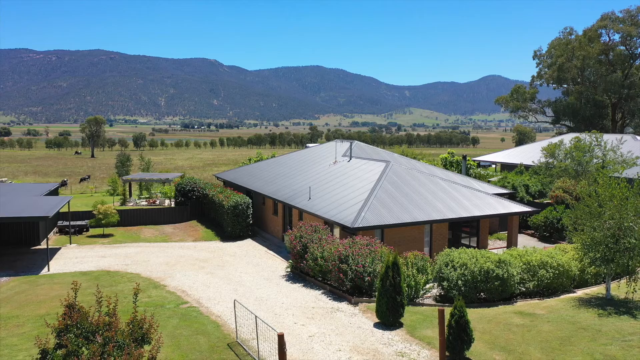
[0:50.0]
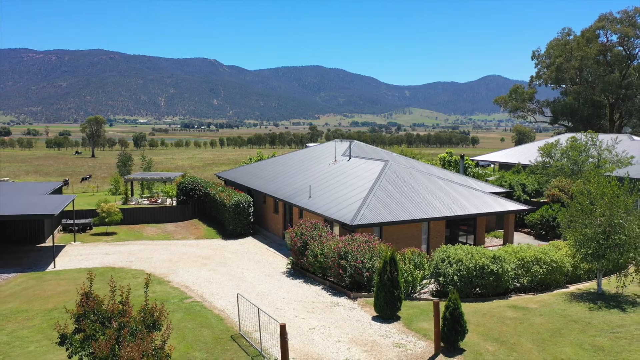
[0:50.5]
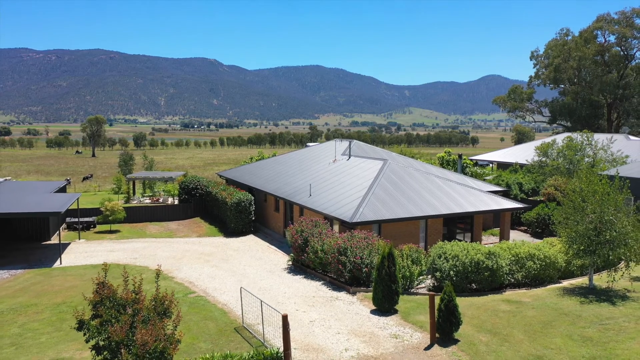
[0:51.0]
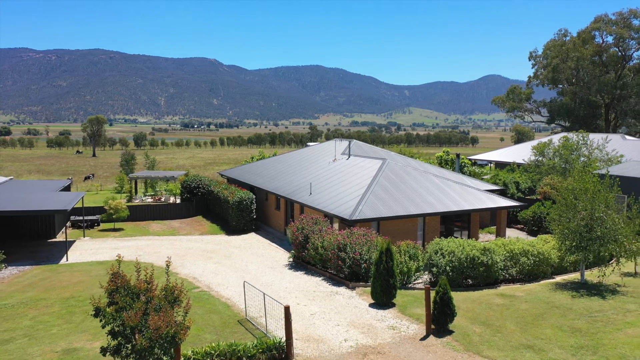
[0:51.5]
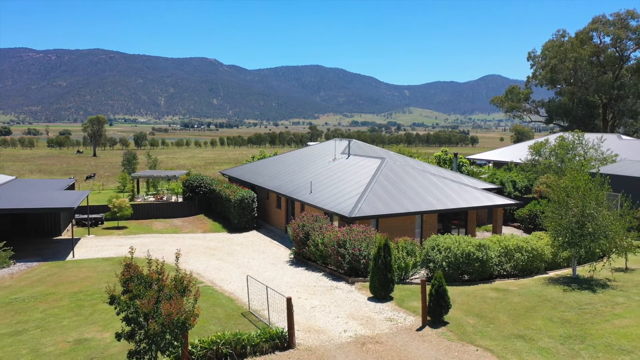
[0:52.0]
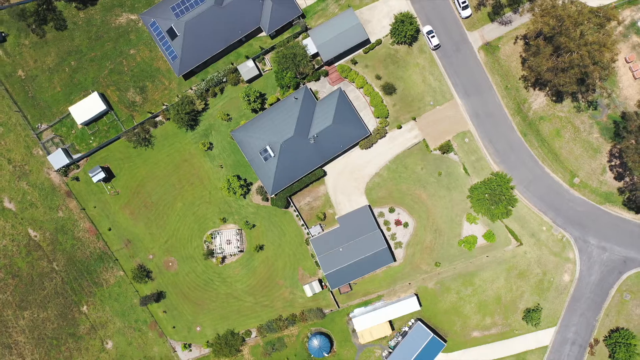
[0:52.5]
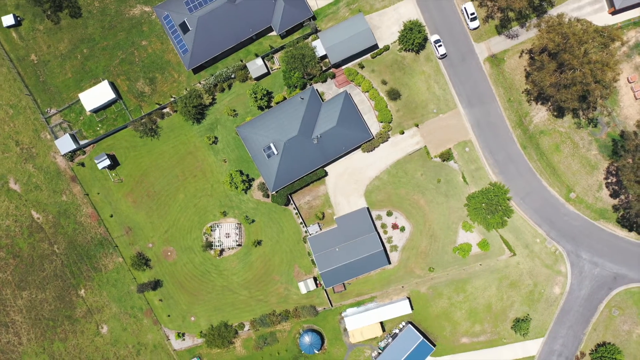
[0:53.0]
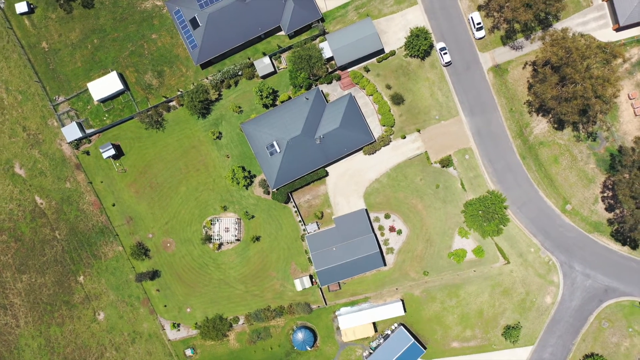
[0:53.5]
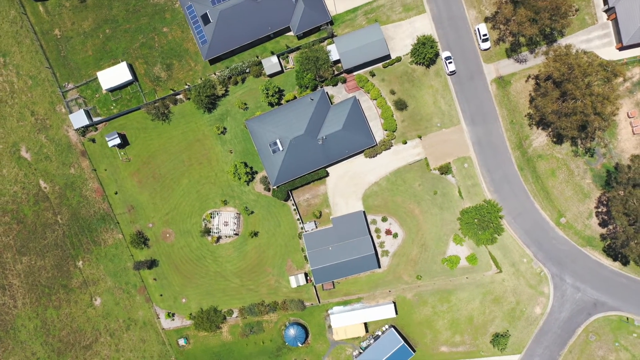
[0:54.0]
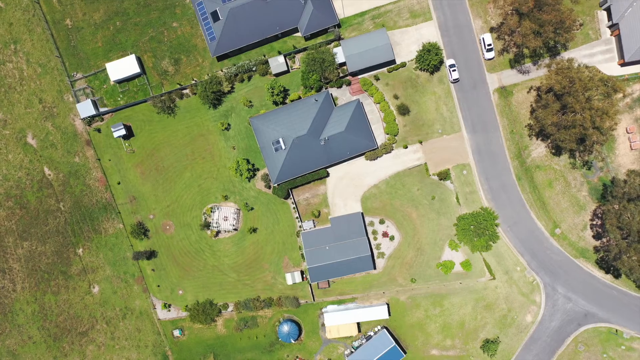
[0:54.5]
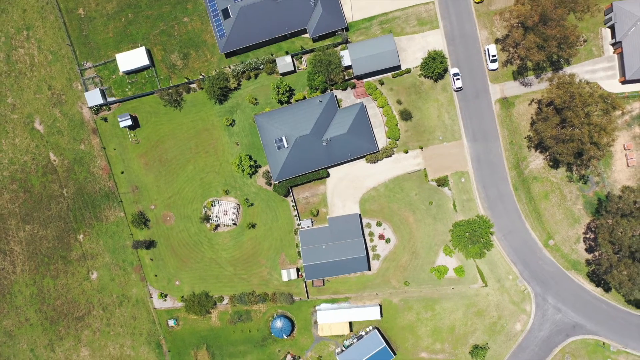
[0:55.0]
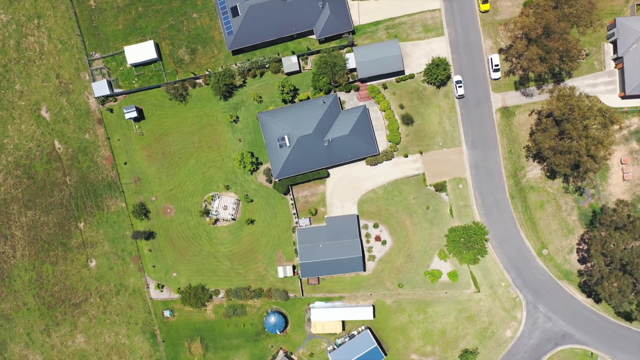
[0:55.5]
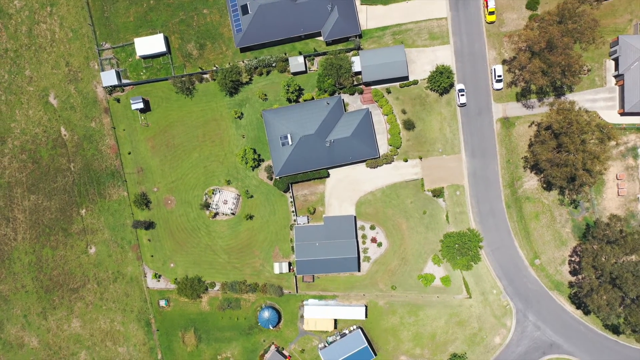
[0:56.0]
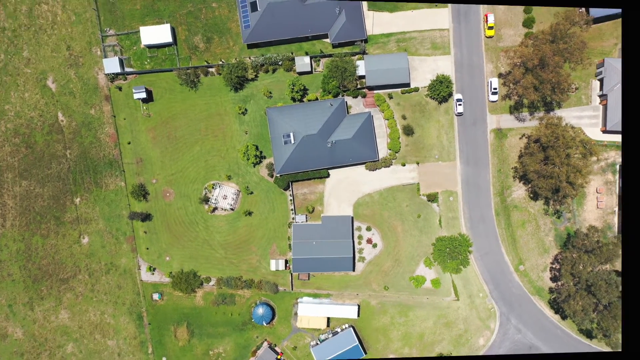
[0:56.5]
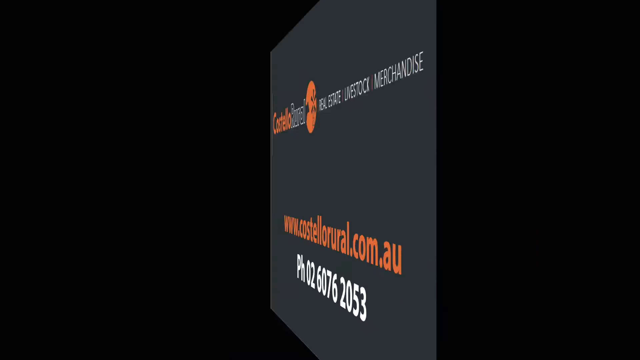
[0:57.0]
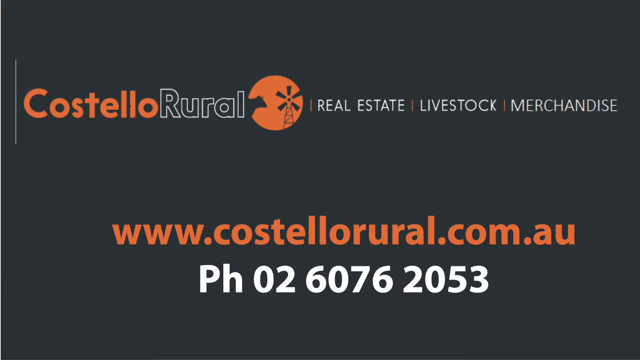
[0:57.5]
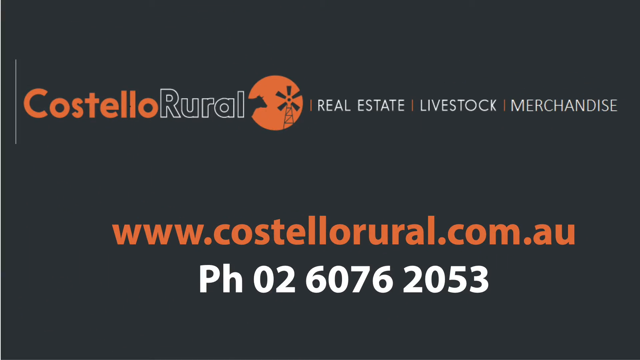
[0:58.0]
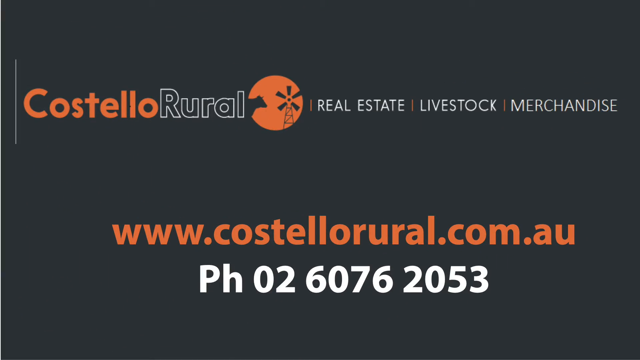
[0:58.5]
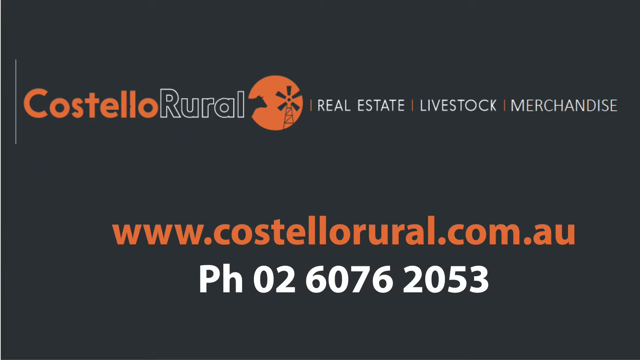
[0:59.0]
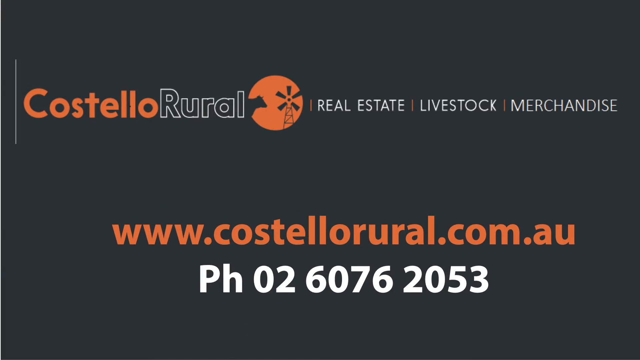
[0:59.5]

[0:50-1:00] A shot of the outside of the house zooms out, showing it surrounded by well-kept bushes. A top view of the house continues zooming out further, revealing the whole property, the green space surrounding it, and the road right in front of it. The video swaps to an outro: a black screen with the Costello Rural logo on top and the text "real estate livestock merchandise", along with the website "www.costellorural.com.au".